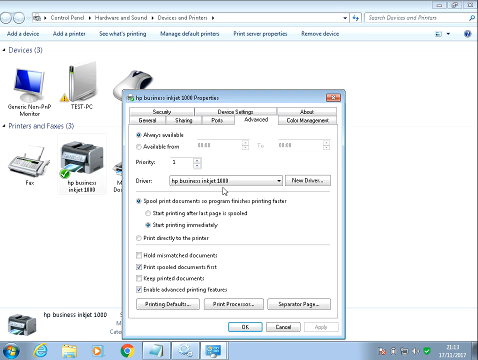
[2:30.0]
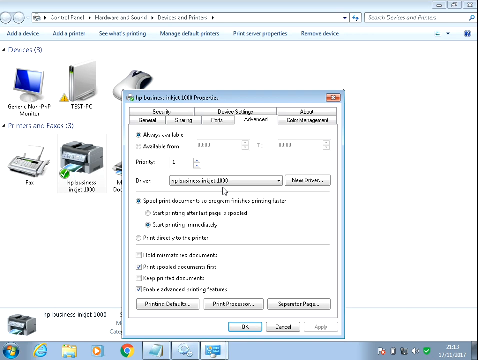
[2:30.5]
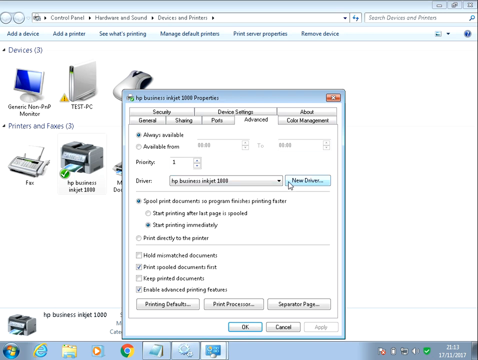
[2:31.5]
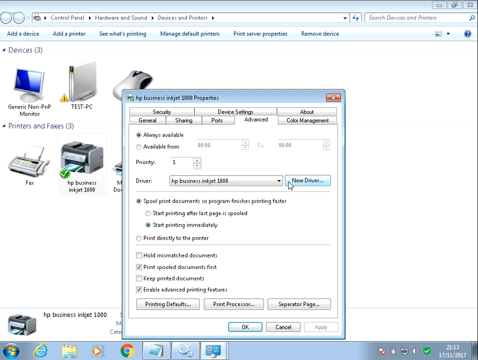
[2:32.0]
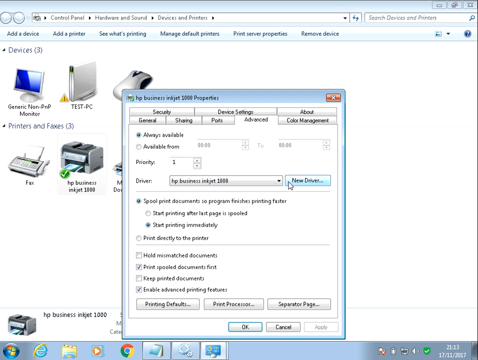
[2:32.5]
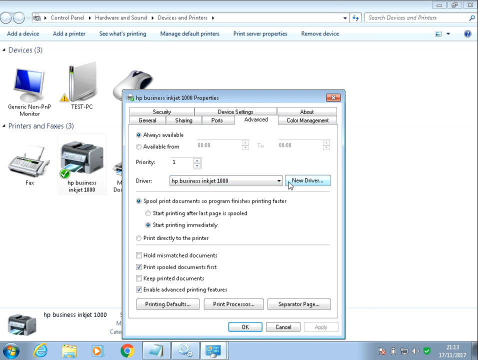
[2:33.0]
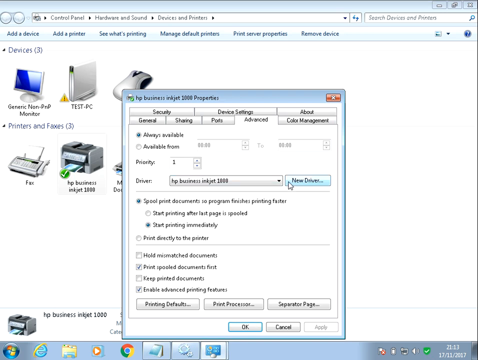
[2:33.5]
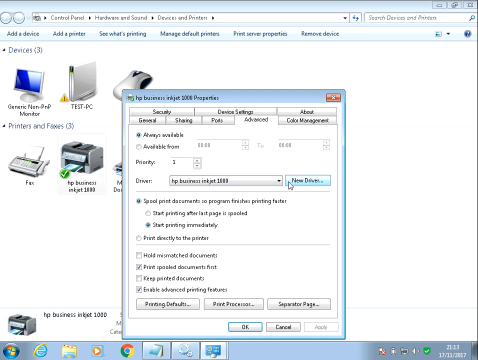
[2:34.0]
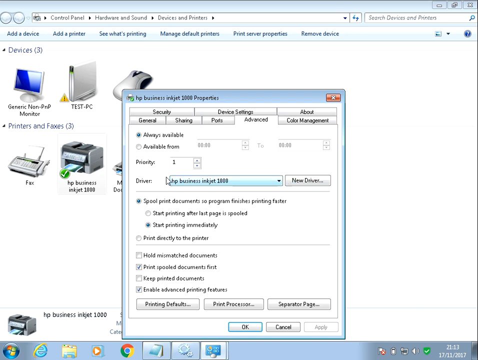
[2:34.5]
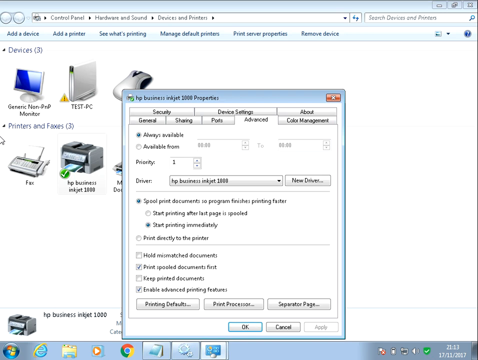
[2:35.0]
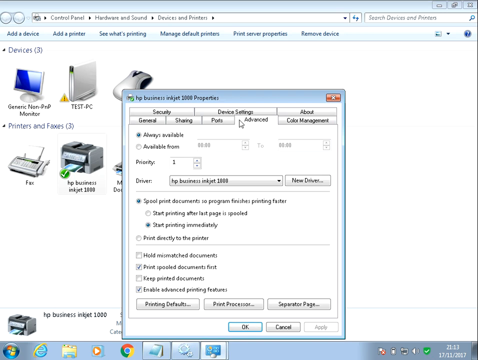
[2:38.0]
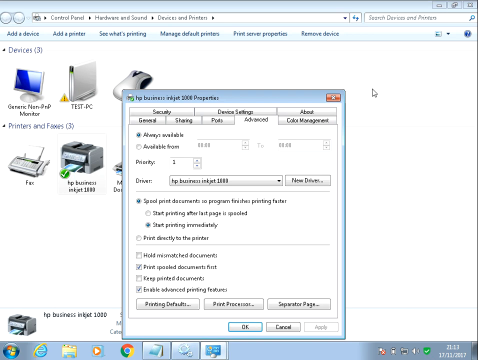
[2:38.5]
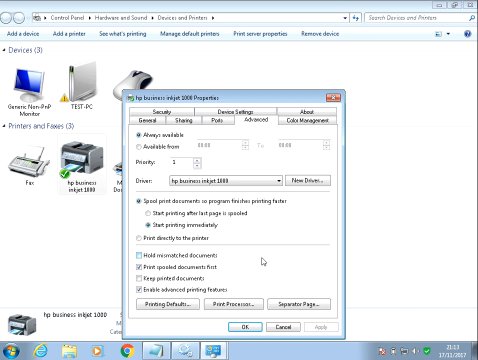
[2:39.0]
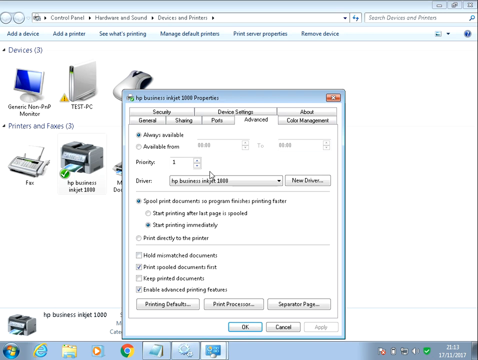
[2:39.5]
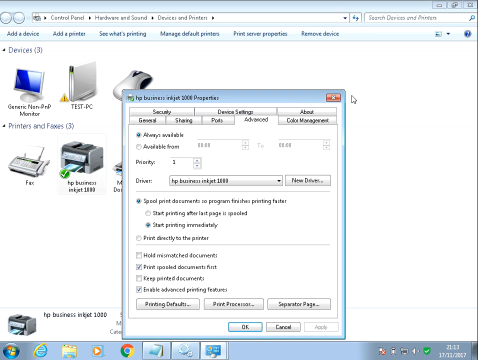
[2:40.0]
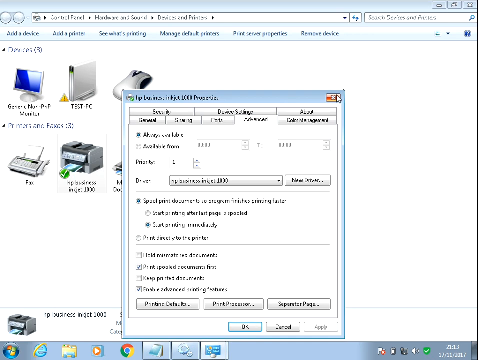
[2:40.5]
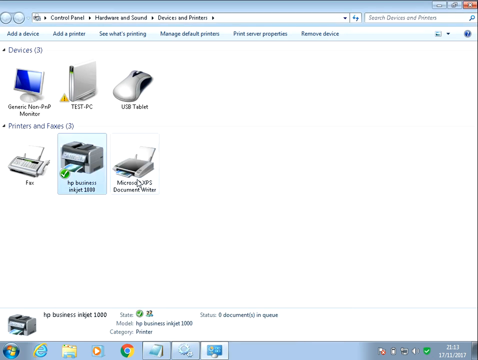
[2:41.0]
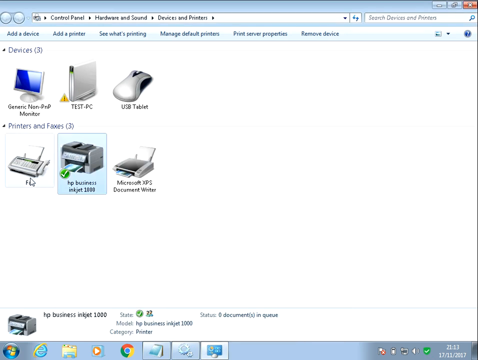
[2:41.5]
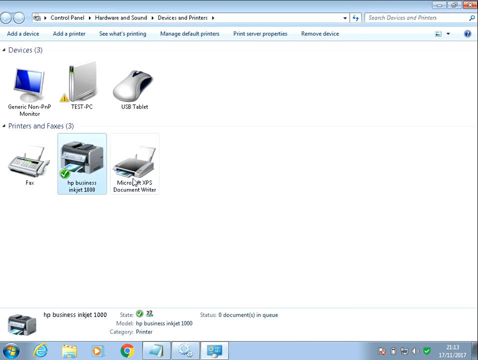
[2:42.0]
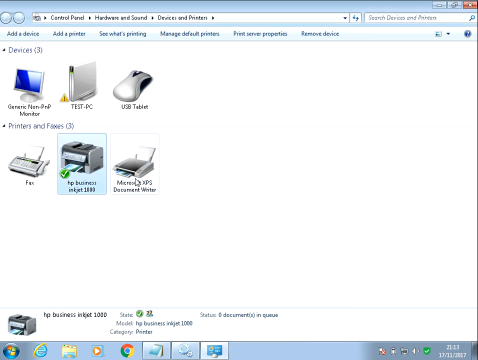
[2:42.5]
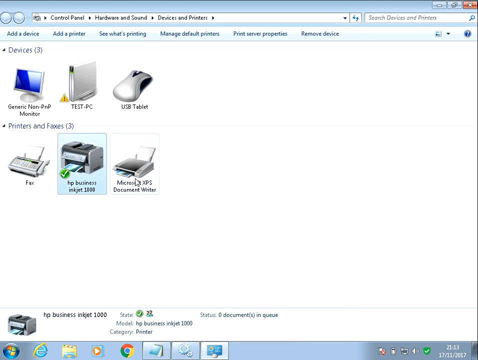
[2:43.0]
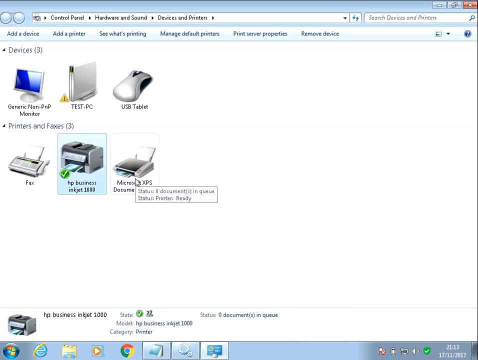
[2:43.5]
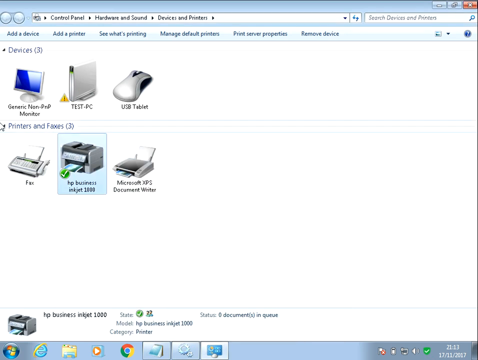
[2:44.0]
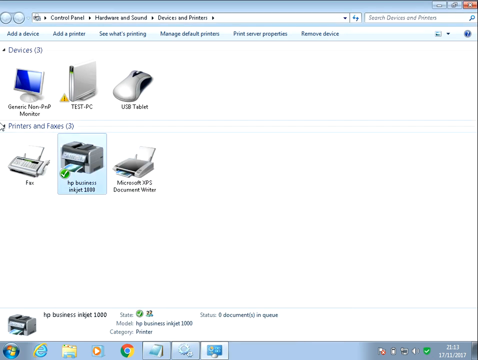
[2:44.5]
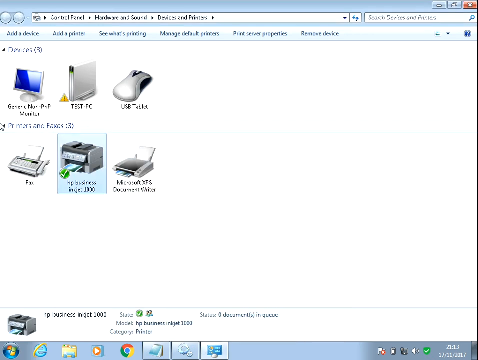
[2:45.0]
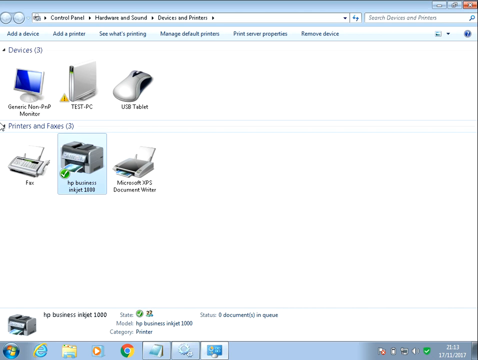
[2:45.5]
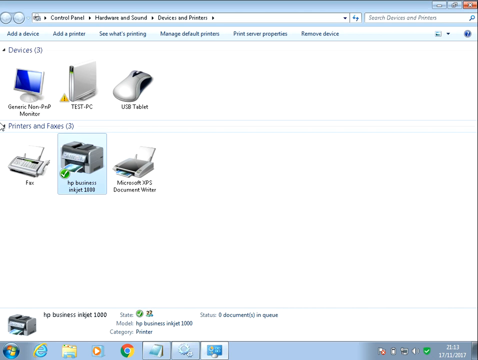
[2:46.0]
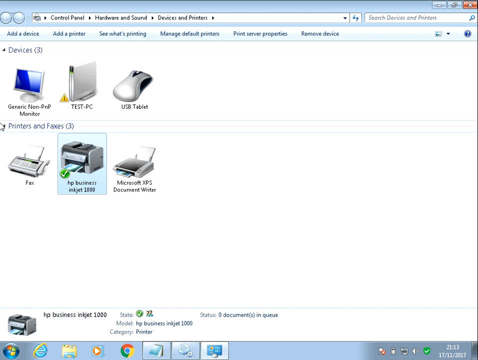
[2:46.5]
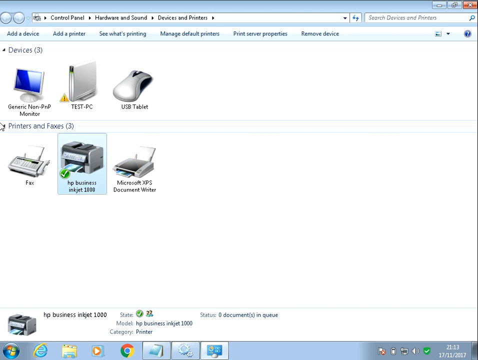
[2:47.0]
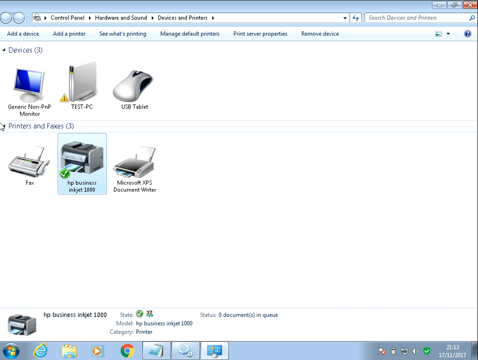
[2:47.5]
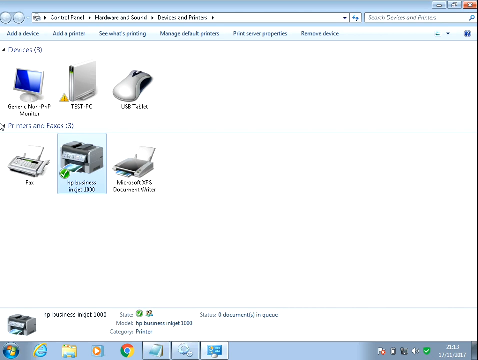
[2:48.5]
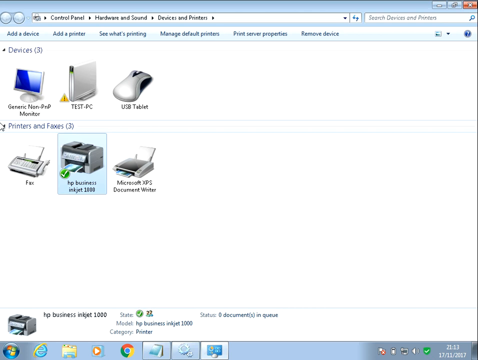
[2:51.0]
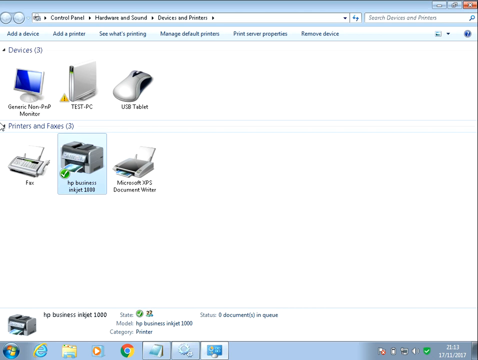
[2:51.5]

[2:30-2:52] The frame is a little wider than it is tall. A window in the background shows the path Control Panel, then Hardware and Sound, then Devices and Printers in the path bar, with the devices and printers listed below. Overlaid on top is another window that says "hp business inkjet 2000 properties" in the upper left, open on the Advanced tab. The mouse is over a button that says "new driver", and the drop-down box just to its left has the hp business inkjet 2000 option selected. The mouse moves to the left, to the upper right, back to the center, and then X's out of that window entirely. The user arrows over the microsoft xps document writer, and the mouse then goes to the left-hand side of the screen and rests there for the remainder of the video. To the left of the document writer is the printer, listed with a green check mark in its lower left-hand corner.